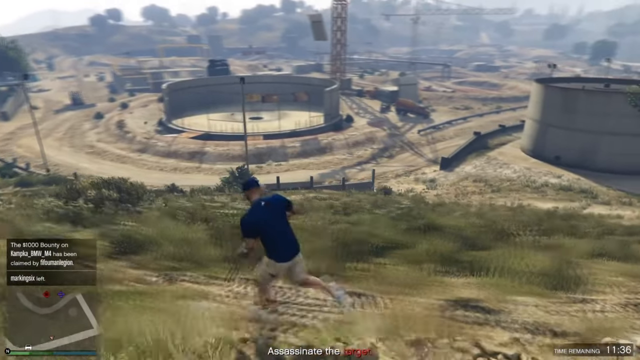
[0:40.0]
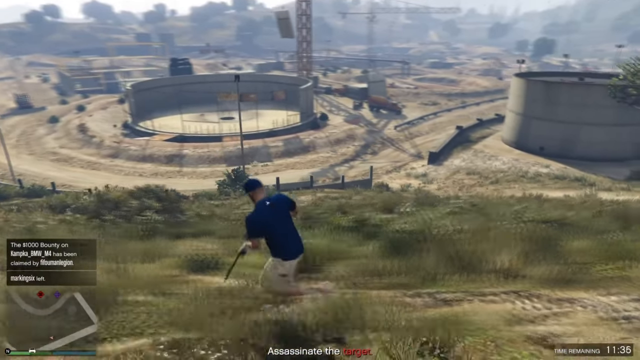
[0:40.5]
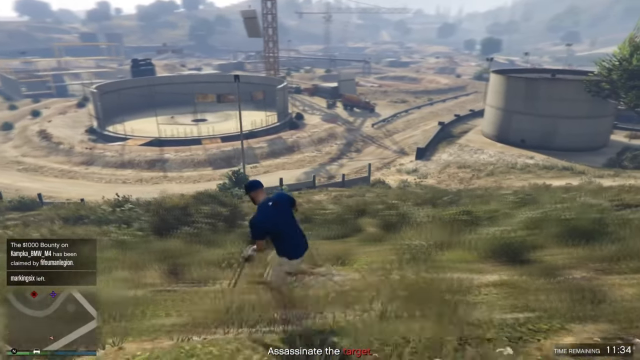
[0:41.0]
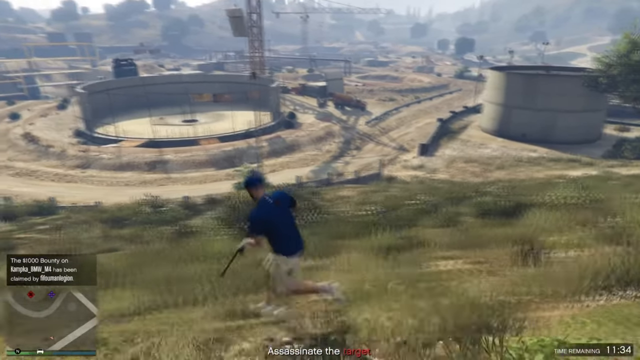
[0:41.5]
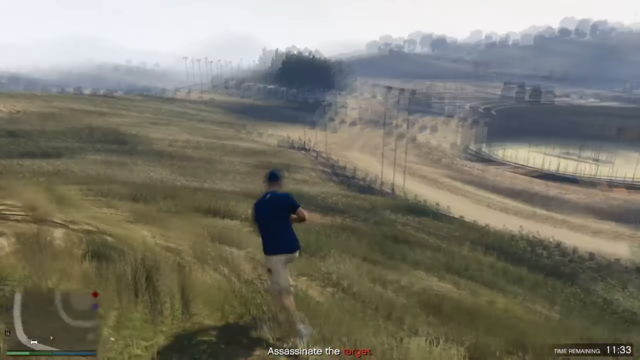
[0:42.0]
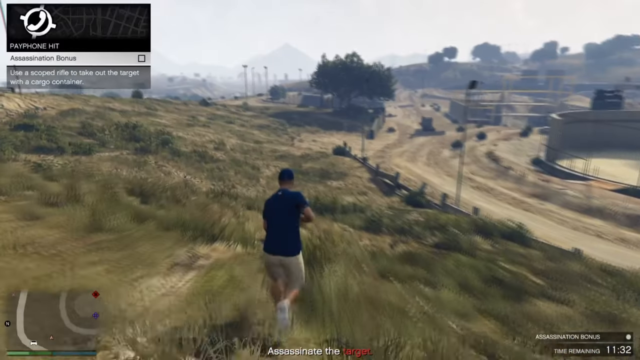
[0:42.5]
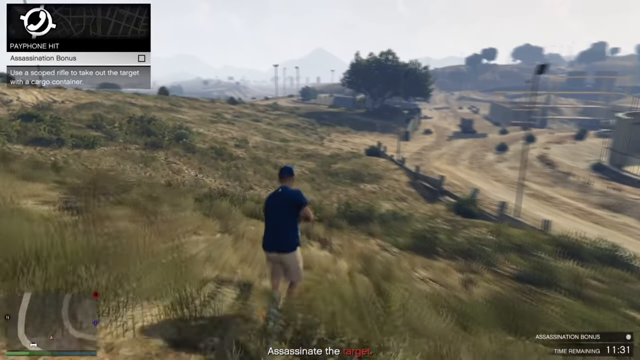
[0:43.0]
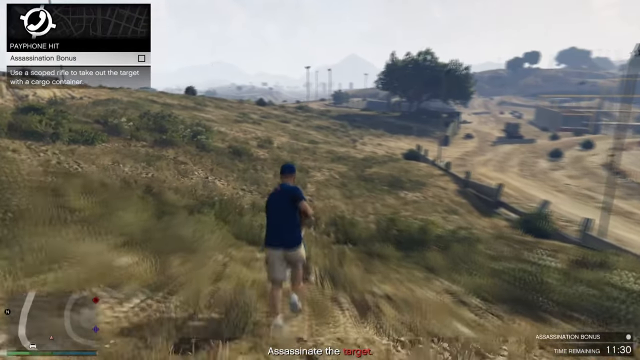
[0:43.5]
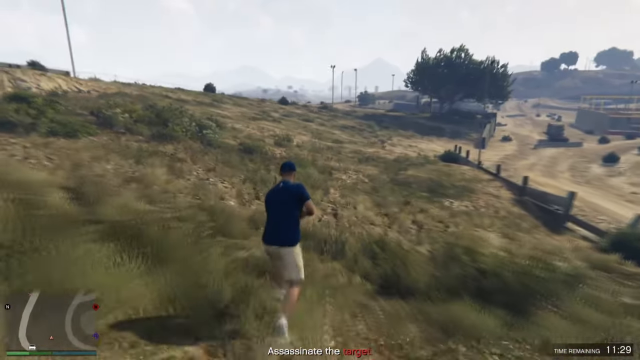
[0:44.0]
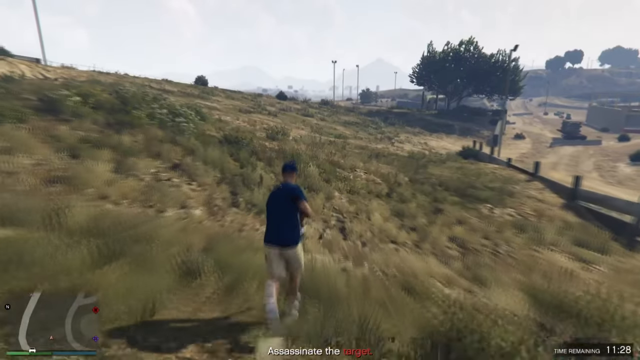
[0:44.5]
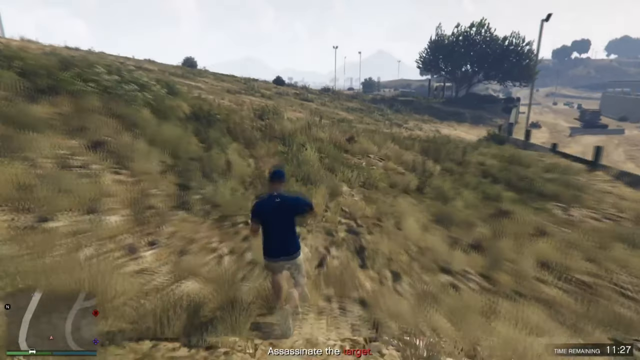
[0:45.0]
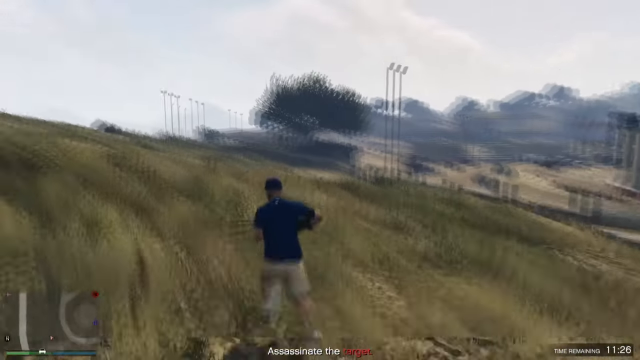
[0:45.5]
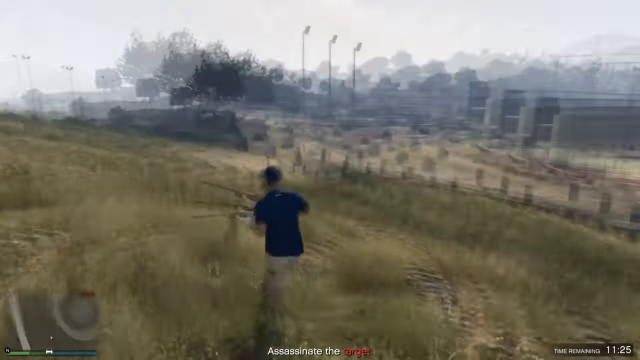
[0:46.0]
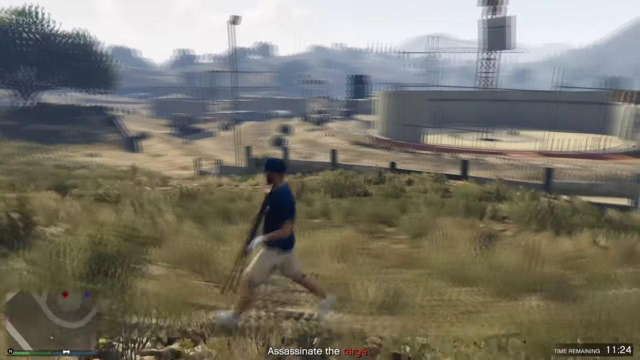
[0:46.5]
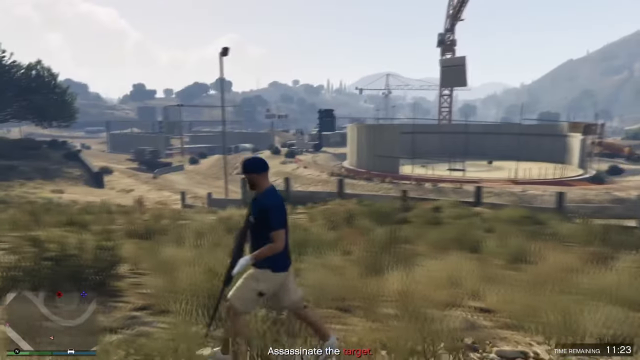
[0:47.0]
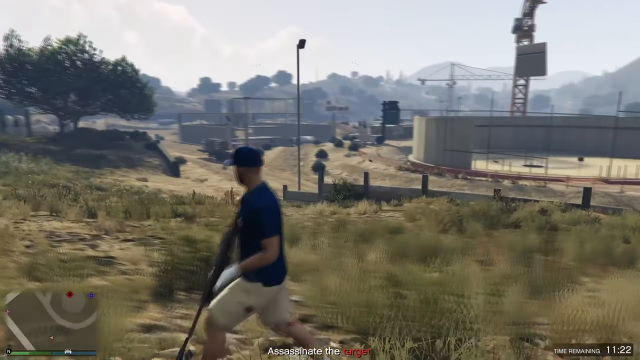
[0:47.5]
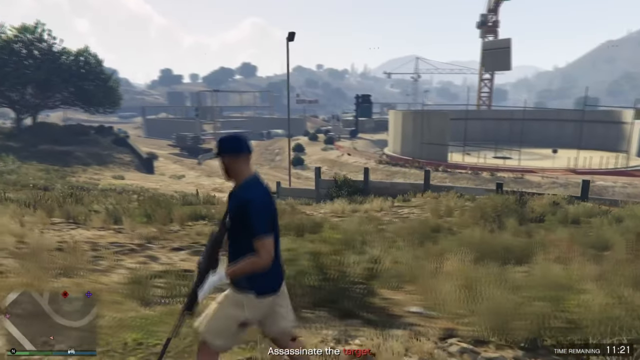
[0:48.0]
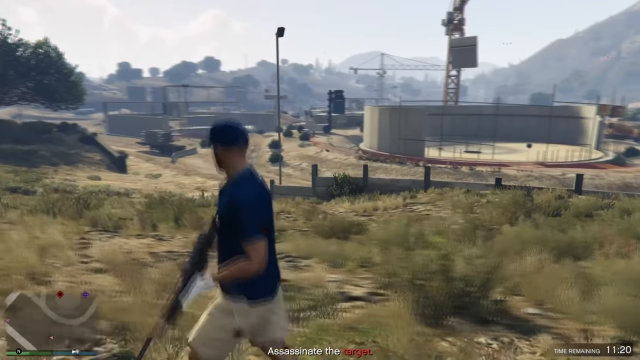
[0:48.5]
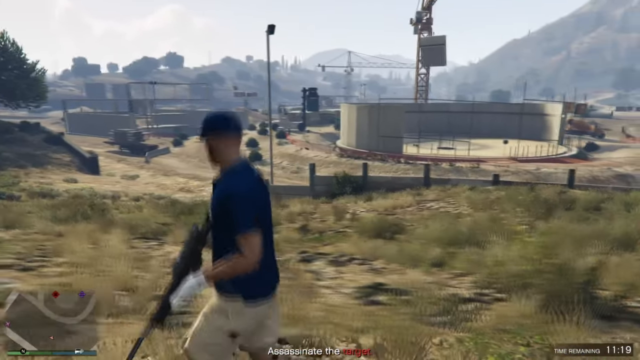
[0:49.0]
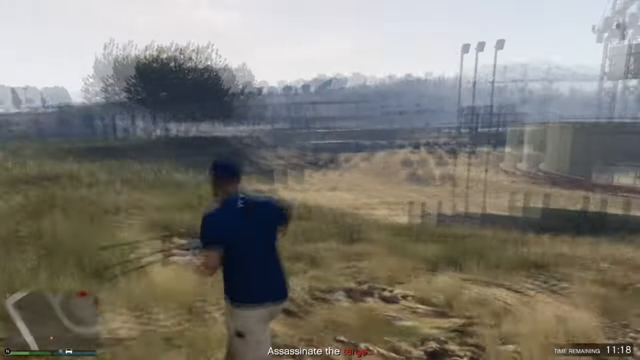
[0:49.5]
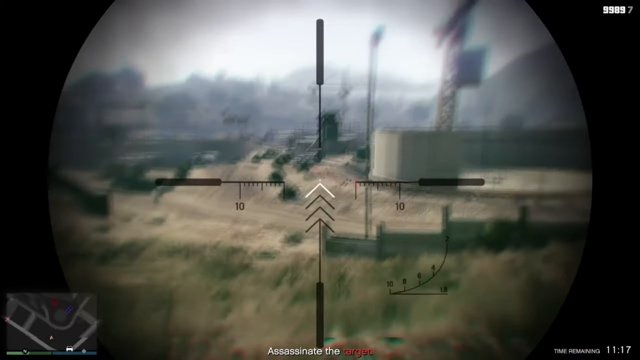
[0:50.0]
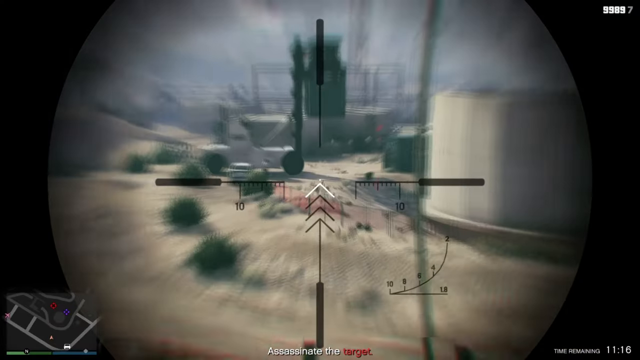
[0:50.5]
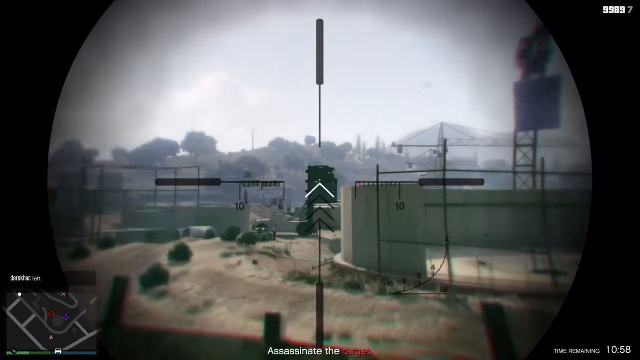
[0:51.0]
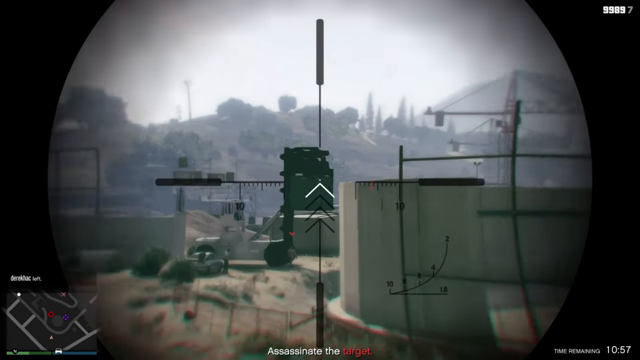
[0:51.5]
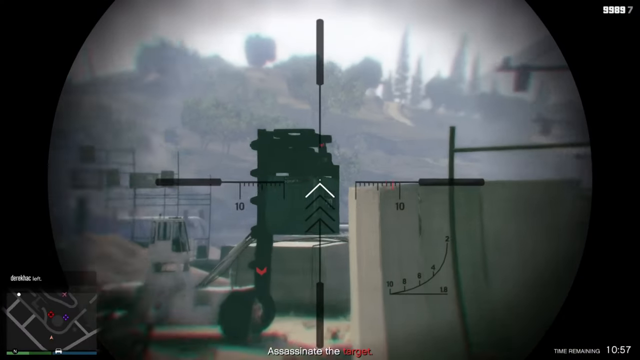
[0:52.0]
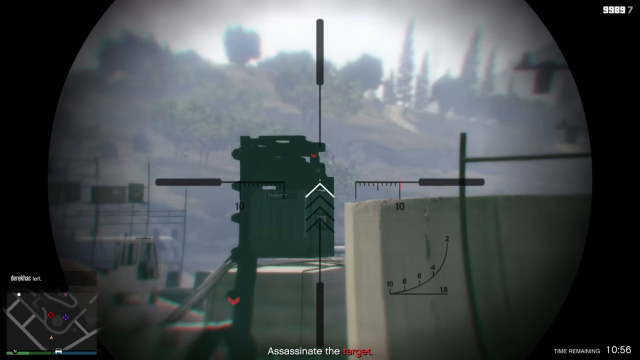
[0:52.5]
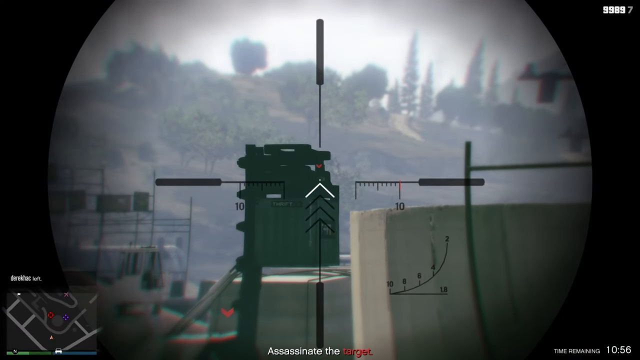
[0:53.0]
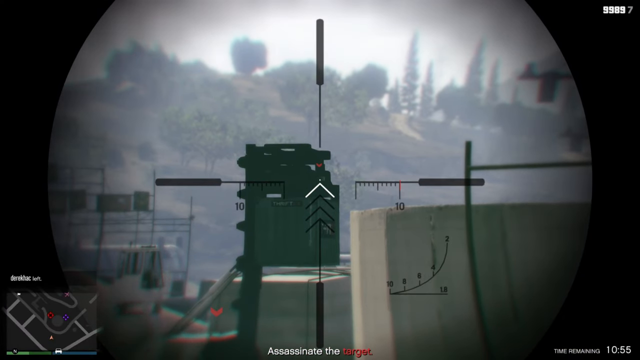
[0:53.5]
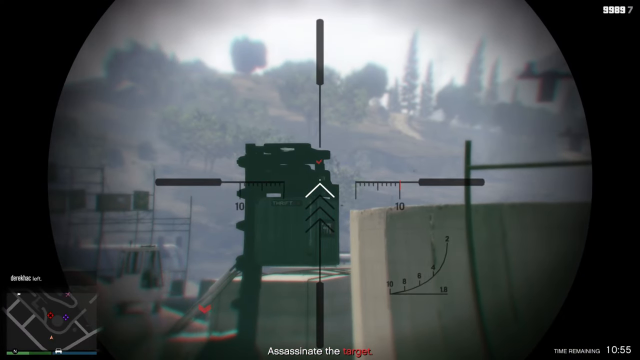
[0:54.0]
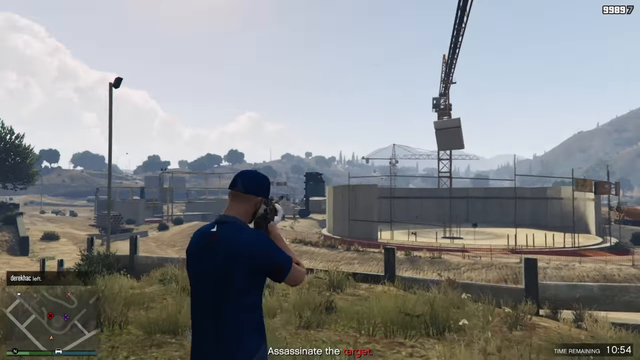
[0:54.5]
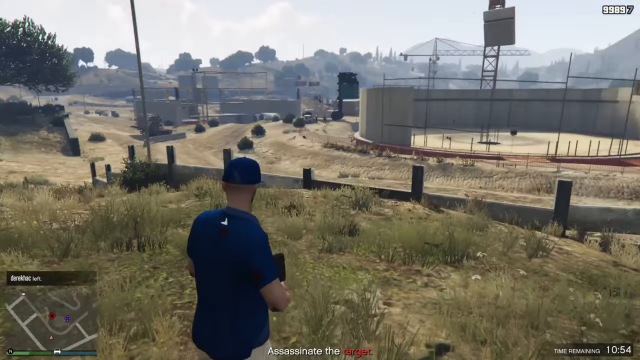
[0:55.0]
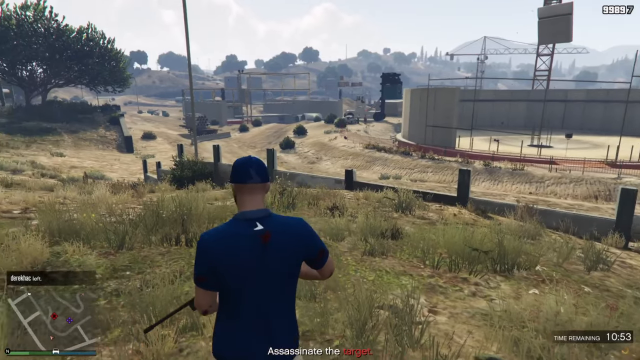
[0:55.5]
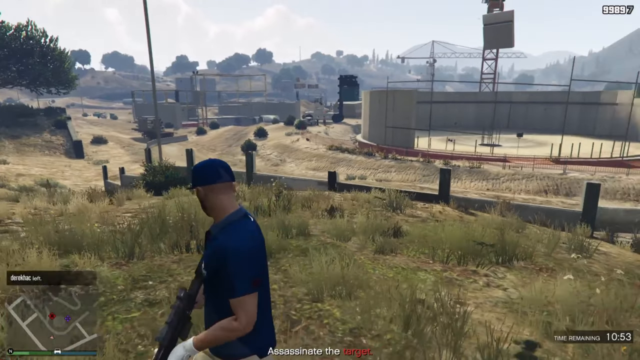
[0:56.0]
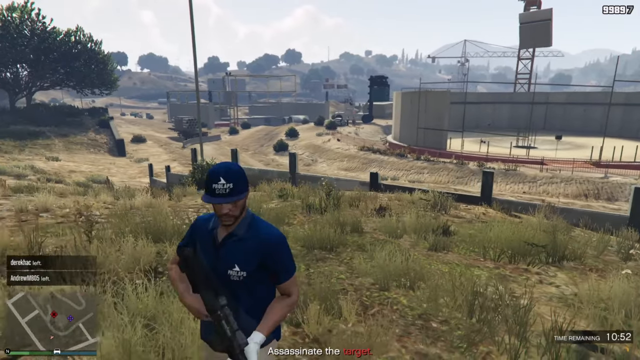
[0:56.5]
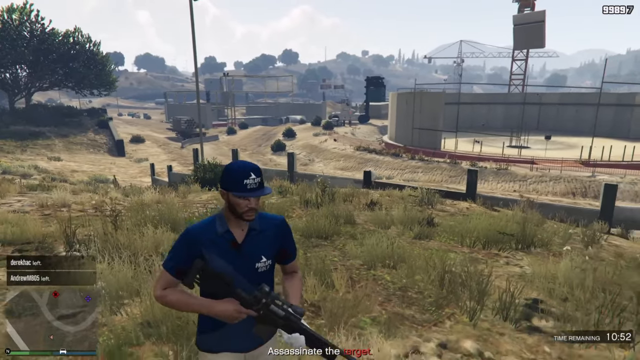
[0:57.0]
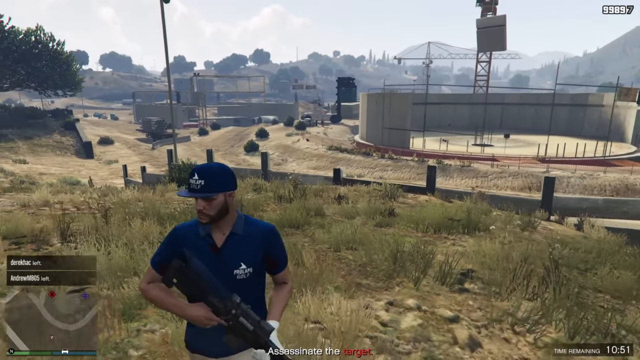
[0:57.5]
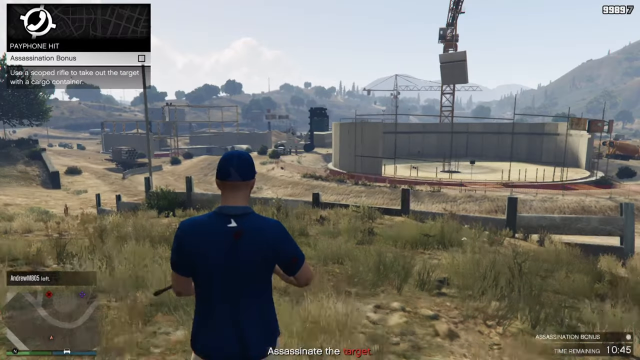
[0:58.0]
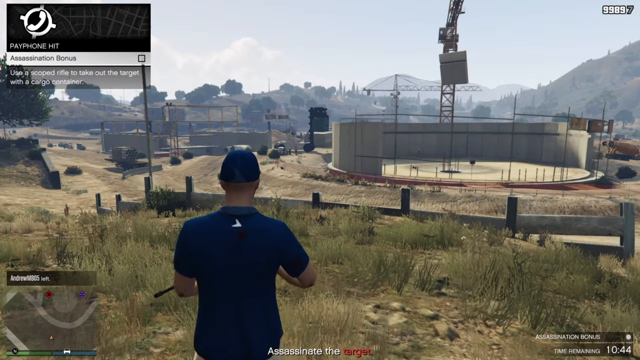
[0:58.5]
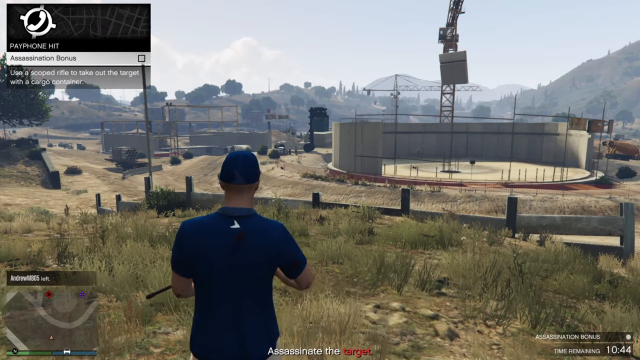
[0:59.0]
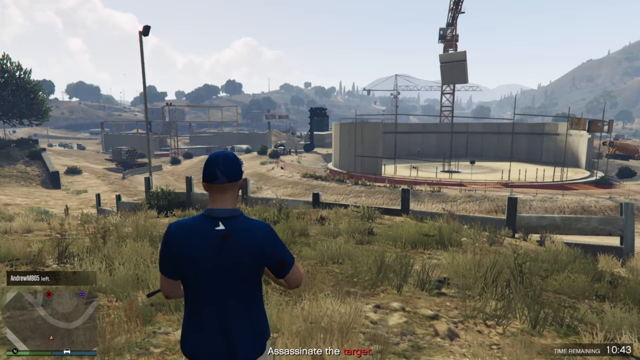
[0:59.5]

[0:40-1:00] A person in the video game runs at a faster speed, apparently sped up, probably around 1.5 times. They wear a blue shirt, a blue hat, and brown shorts, have white skin, and appear to be holding a weapon as they run, apparently a sniper rifle. They run on a hill with greenish grass and a little yellowing. It is daytime, though the sky at the top is very foggy. The person keeps running and walking at this high speed. Text at the bottom says "assassinate the target," with the word "target" in bright red. The person stops and looks toward the construction zone, and the view becomes a sort of sniper point of view with the scope visible. Then the person's back is shown for a couple of seconds as he stops aiming and pauses. Numbers at the top right apparently read "99897," possibly the money the character has. The setting is a very construction-like zone: in the middle right a large, sort of circular building is being built, and at the top right a large crane carries a large piece of wall.